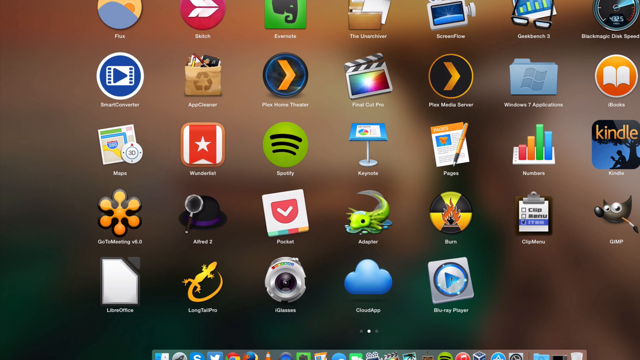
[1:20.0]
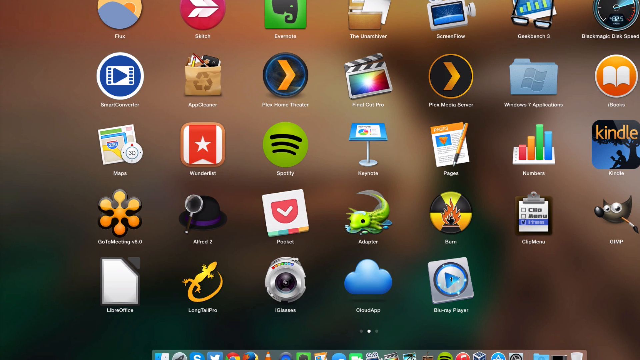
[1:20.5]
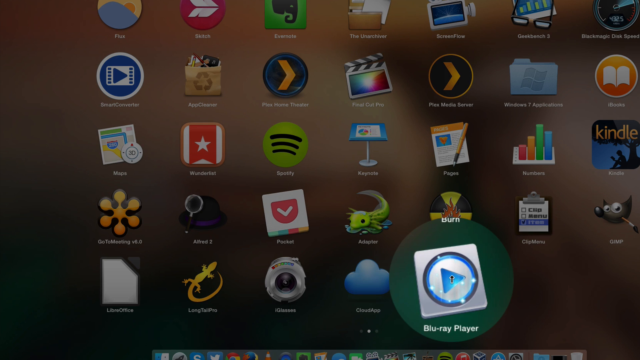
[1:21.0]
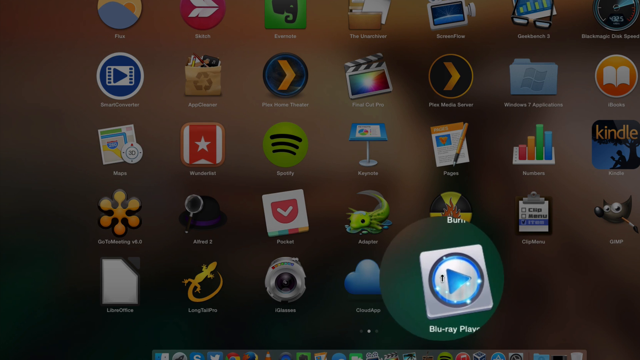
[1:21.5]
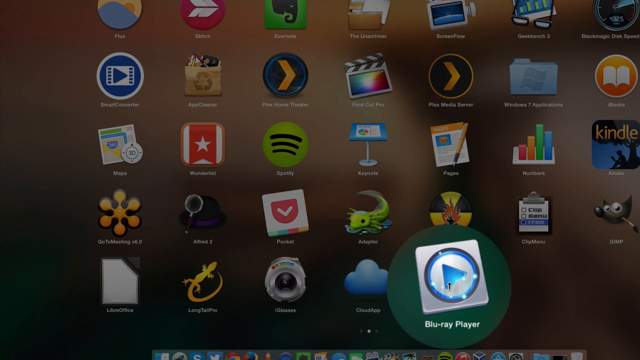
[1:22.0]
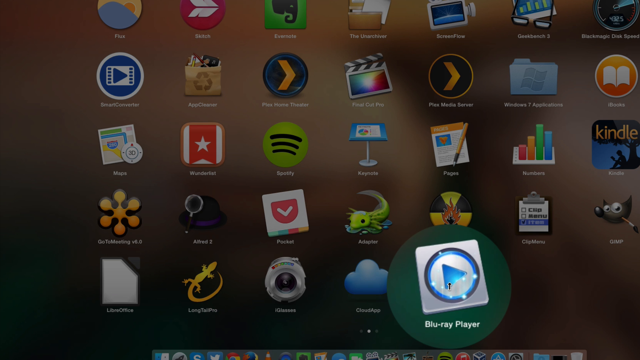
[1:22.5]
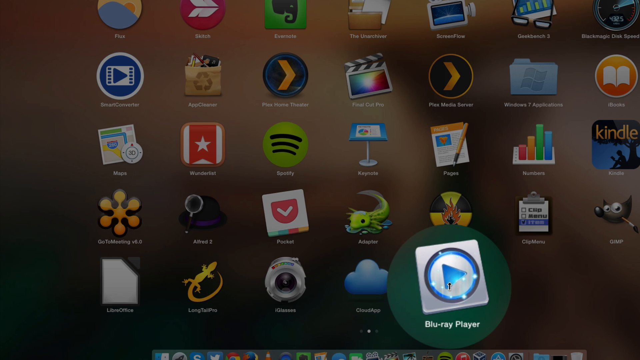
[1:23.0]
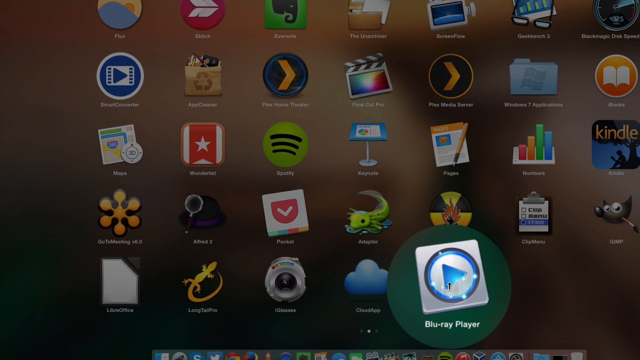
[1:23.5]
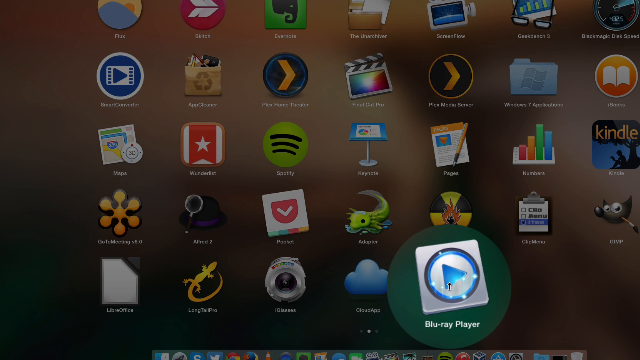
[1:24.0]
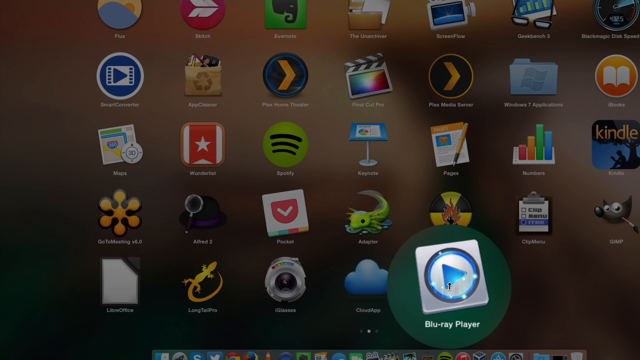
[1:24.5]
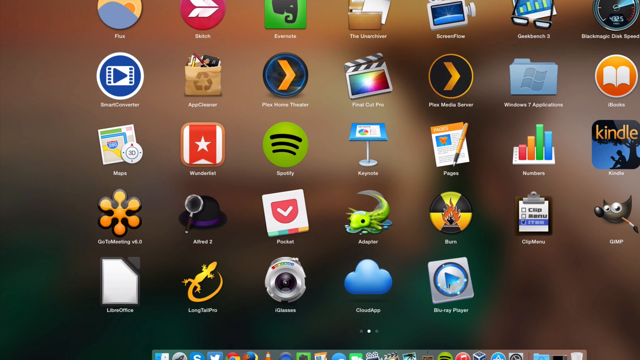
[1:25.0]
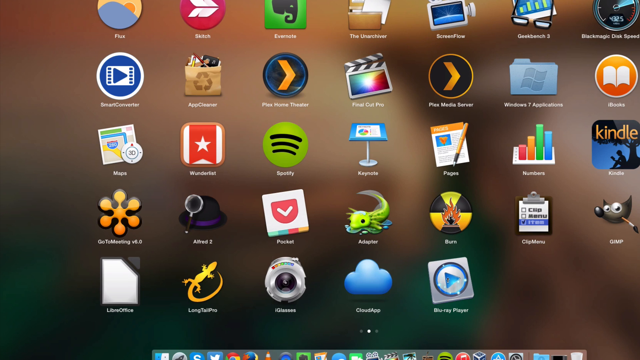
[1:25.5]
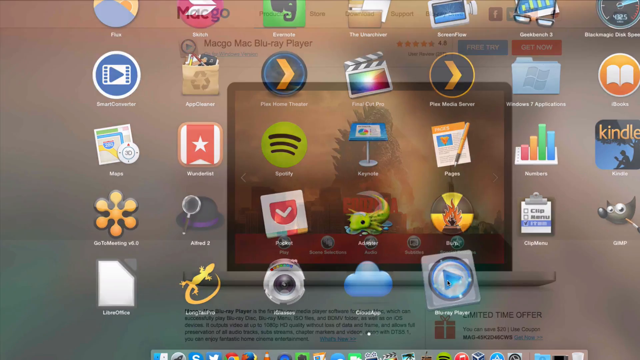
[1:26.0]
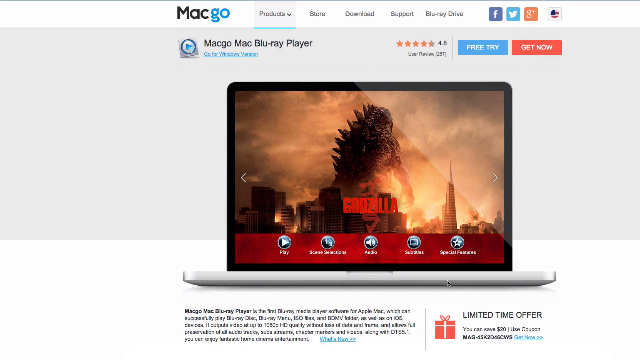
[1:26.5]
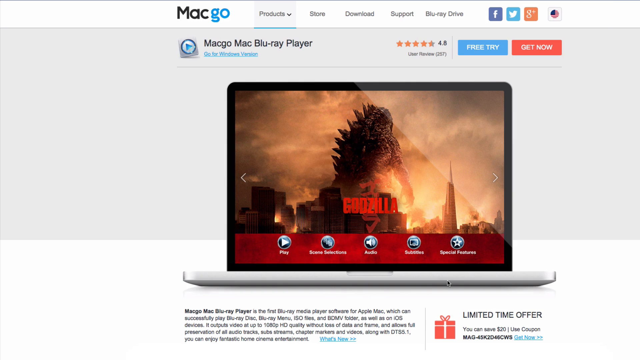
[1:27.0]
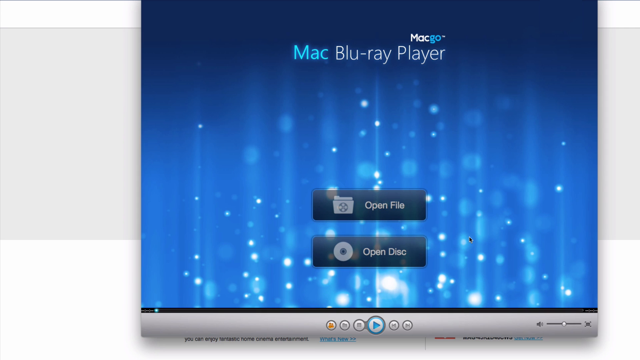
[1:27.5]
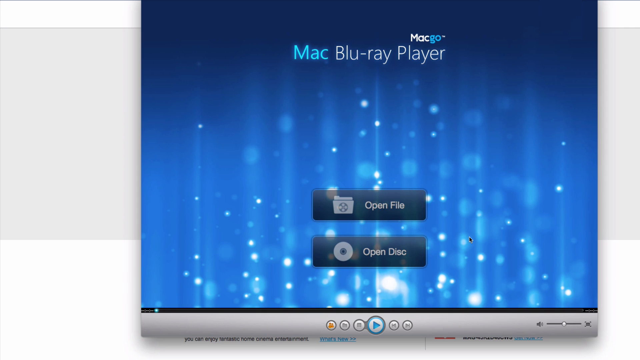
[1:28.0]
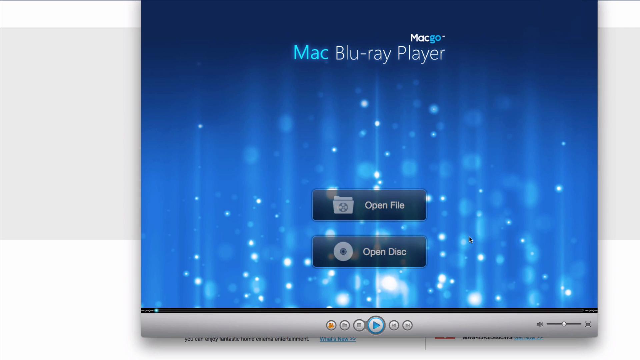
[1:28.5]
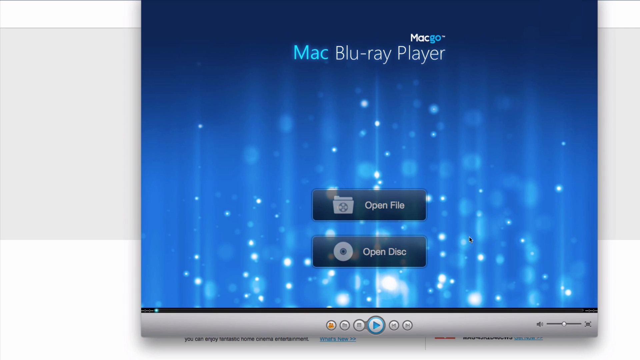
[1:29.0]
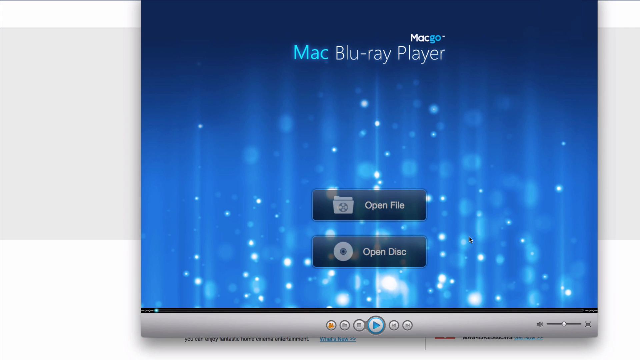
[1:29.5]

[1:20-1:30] A quick glimpse of a desktop appears, and the person uses the mouse to click or highlight something that comes up in a green circle. Inside the circle is a blue play button with a circle around it, white on top of a white square, labeled "blu-ray player." A large blue screen opens, covering part of the white screen background, reading "mac go mac blu-ray player" with two options, "open file" and "open disk." The view then returns to the desktop without showing what is chosen. The desktop has an app titled "blu-ray player." The video quality is not very good, with the desktop being the clearest part.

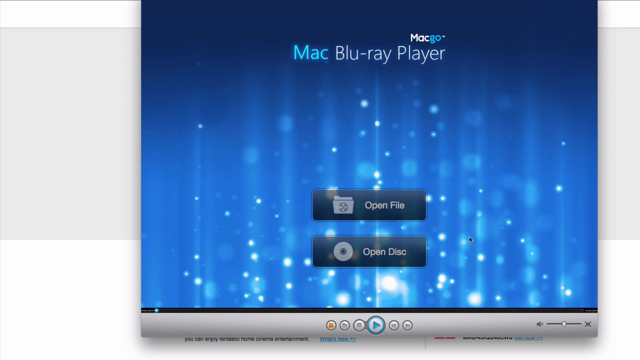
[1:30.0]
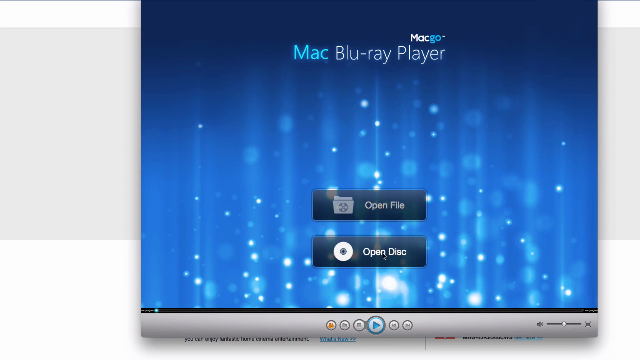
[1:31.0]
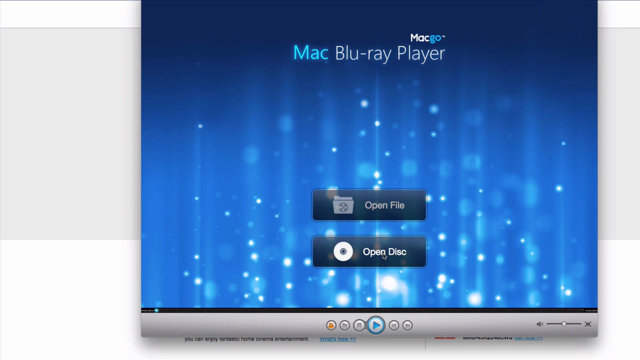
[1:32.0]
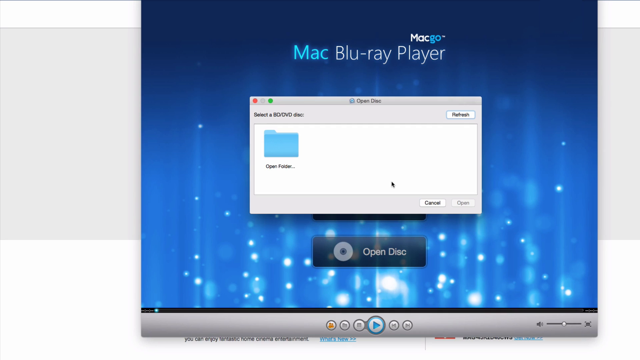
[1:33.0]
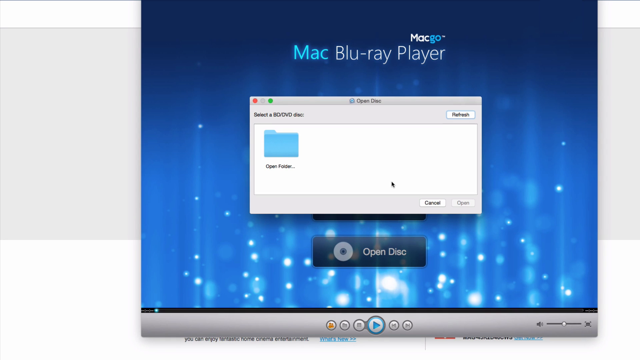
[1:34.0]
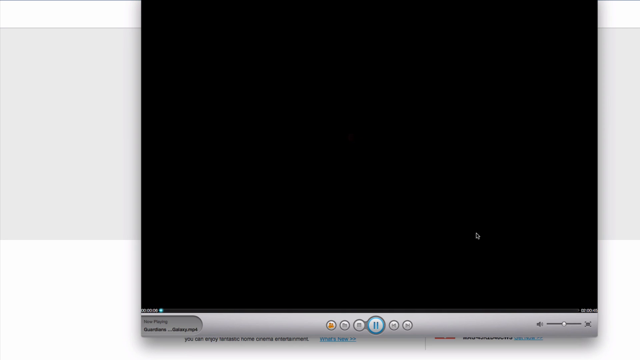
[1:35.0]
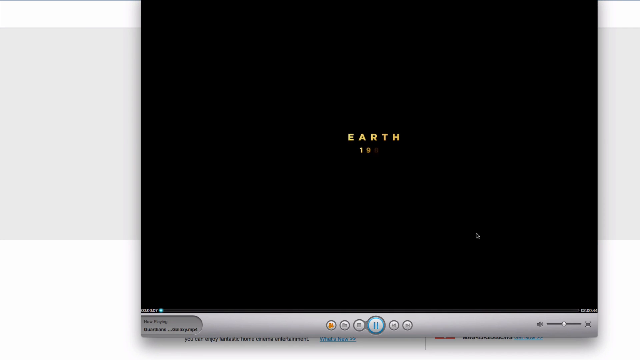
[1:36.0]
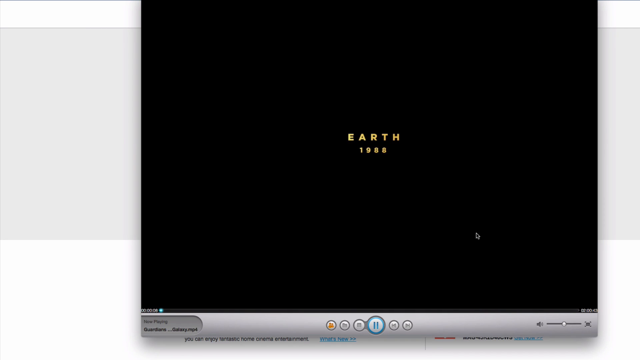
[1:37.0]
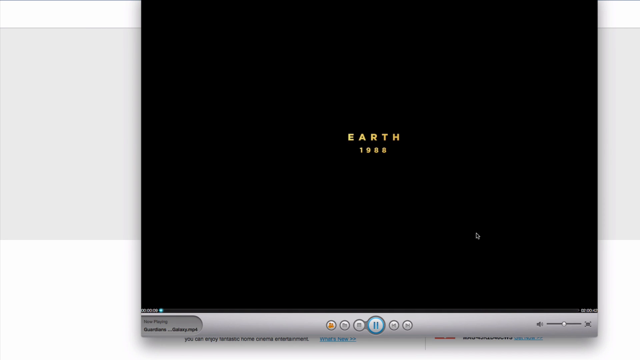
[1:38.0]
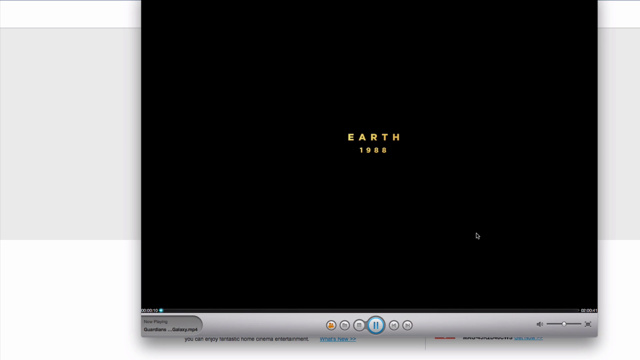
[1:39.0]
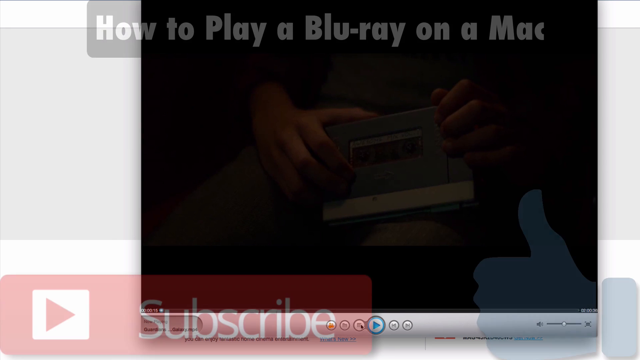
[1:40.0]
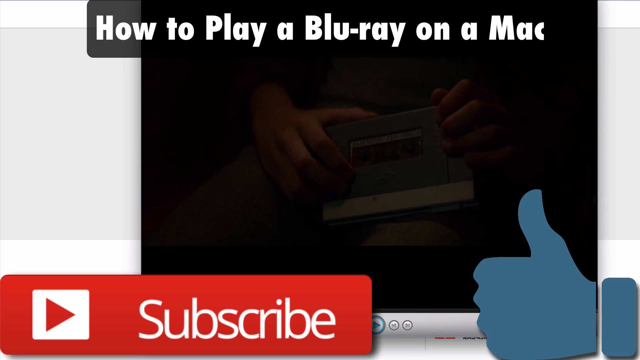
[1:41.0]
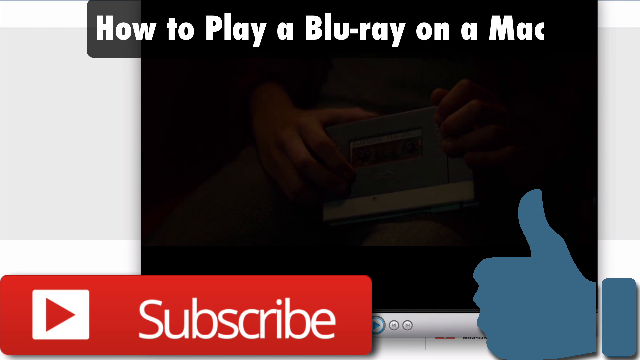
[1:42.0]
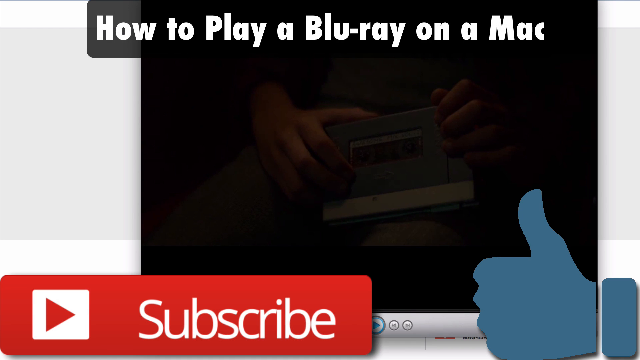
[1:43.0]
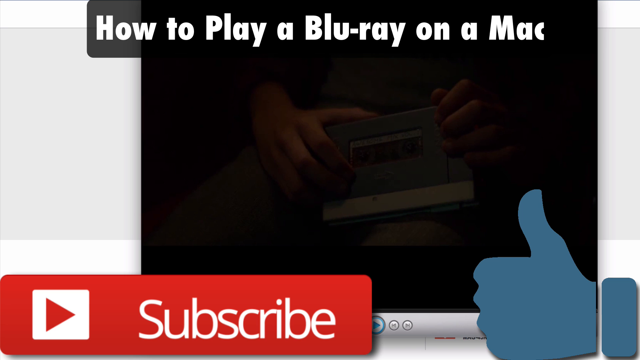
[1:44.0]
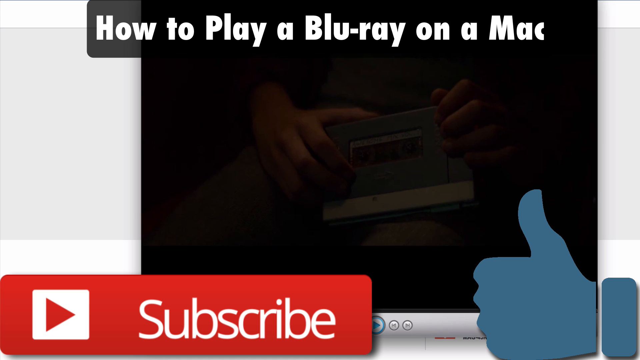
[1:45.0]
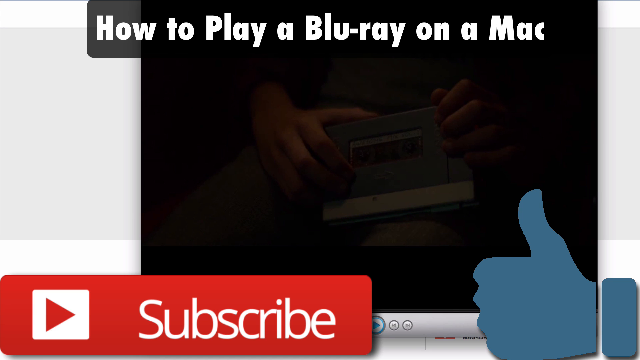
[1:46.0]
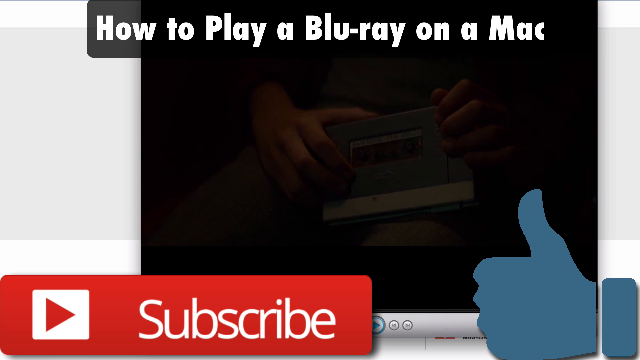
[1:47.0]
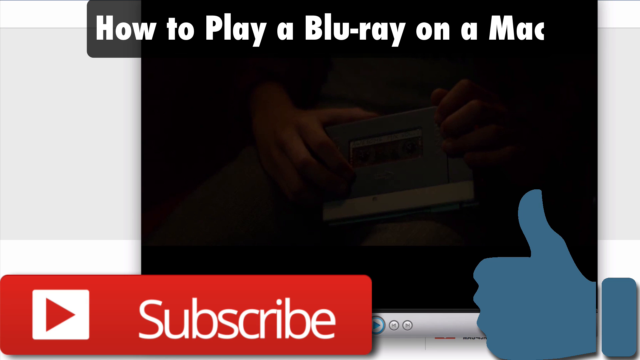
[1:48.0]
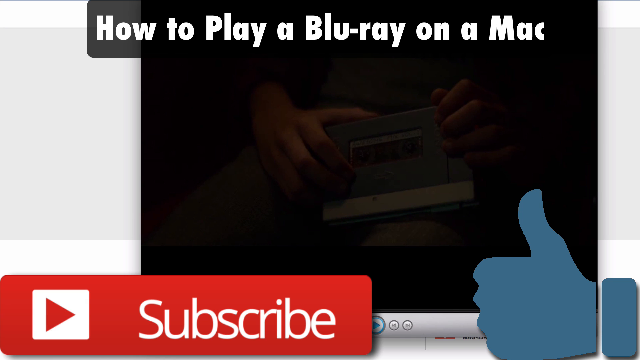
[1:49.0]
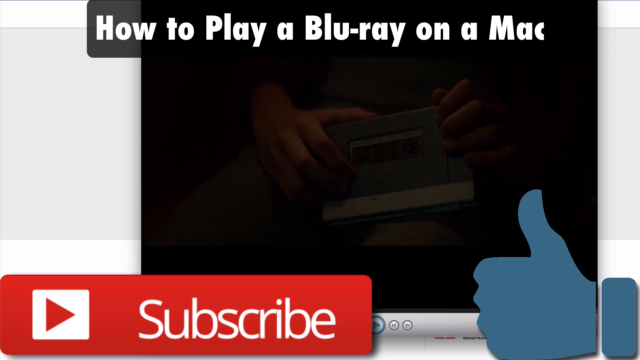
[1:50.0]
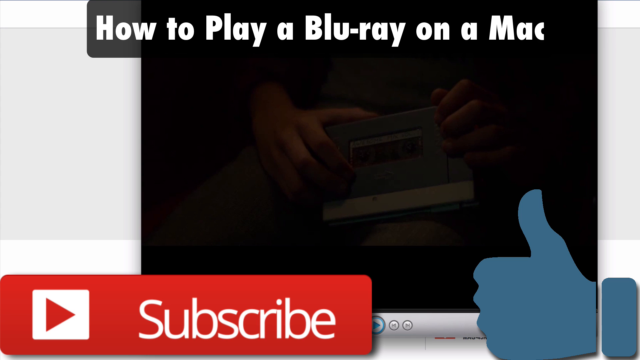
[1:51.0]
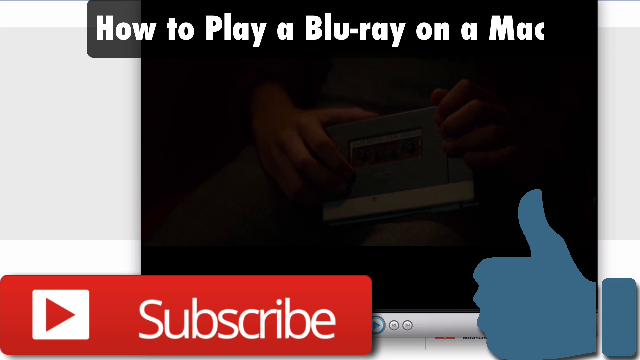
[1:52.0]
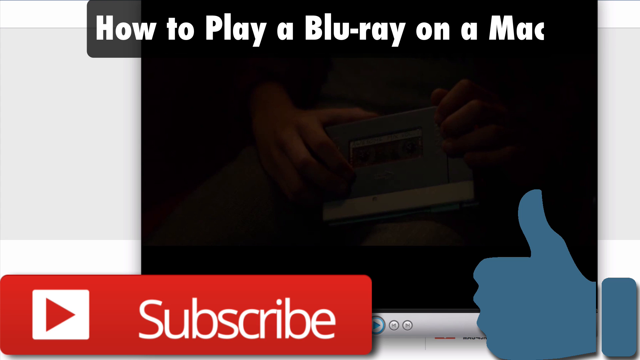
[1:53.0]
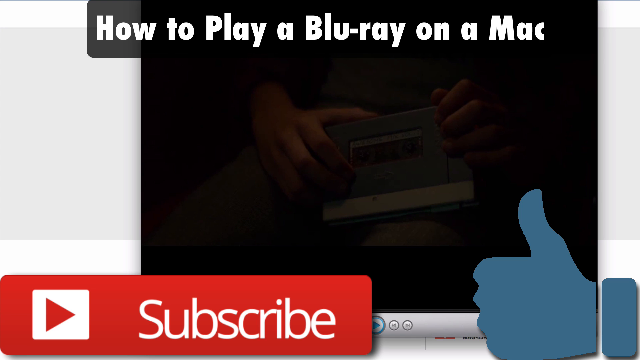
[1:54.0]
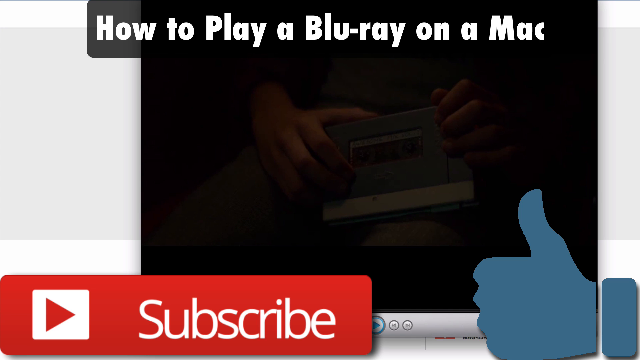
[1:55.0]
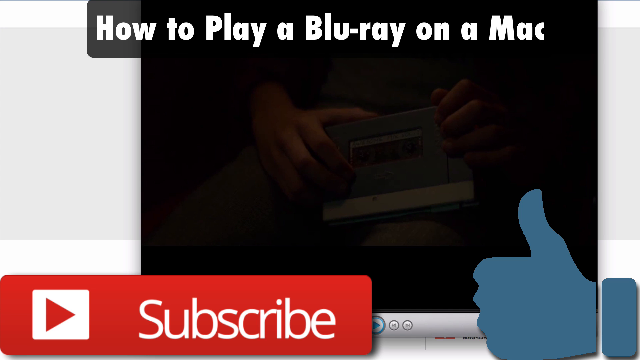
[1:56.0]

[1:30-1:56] The person clicks on "open disk," and a small blue file opens. It is not clear whether they click on it, but suddenly a black screen pops up reading "EARTH 1988" in yellow letters. The screen then changes to a black text box with white words reading "how to play a Blu-ray on a Mac." In the bottom left is a long red rectangle with the white word "subscribe," and to the left of the word is a white square with a red arrow pointing to the right. On the lower right side of the screen is a blue graphic of a wrist and hand giving a thumbs up. This screen stays for several moments as the video ends.